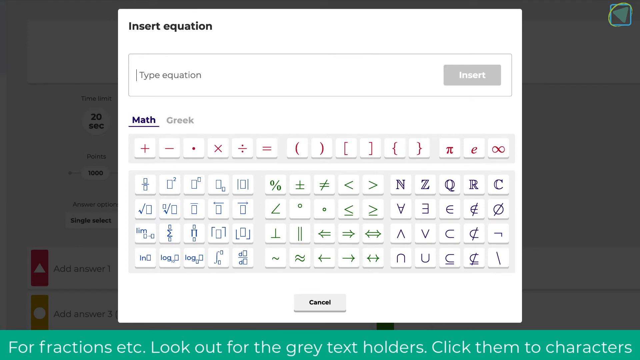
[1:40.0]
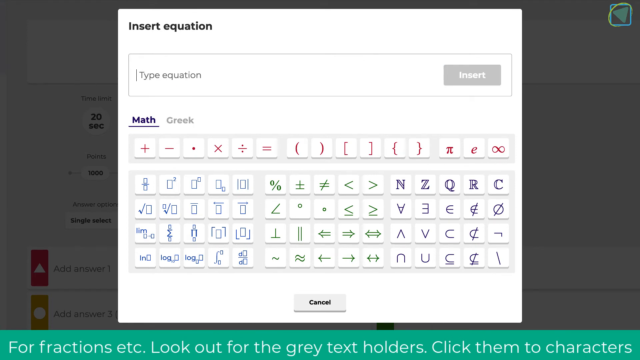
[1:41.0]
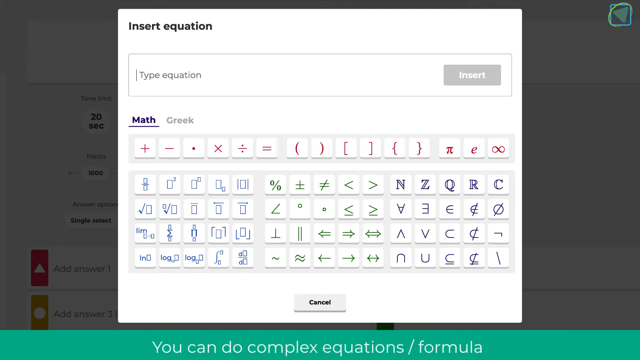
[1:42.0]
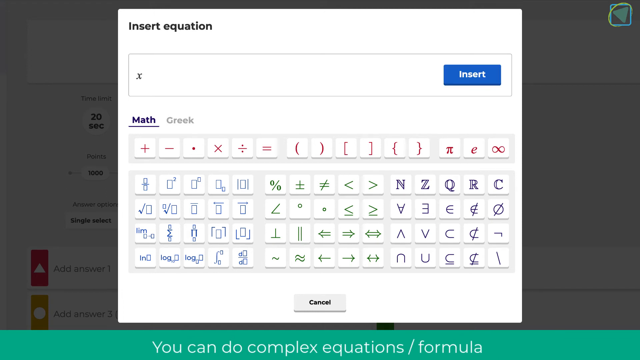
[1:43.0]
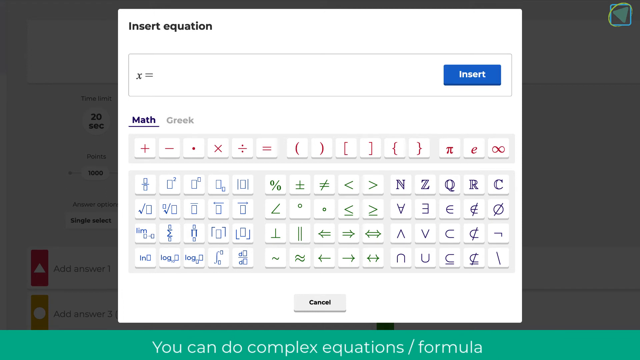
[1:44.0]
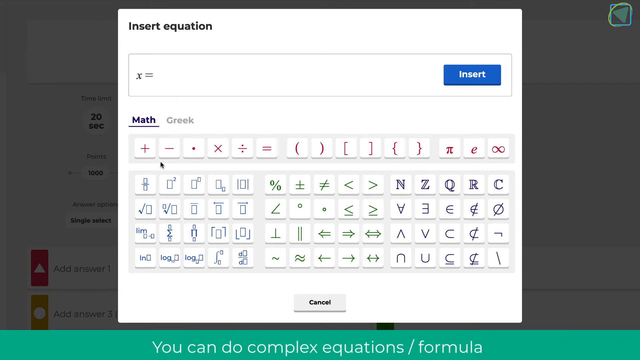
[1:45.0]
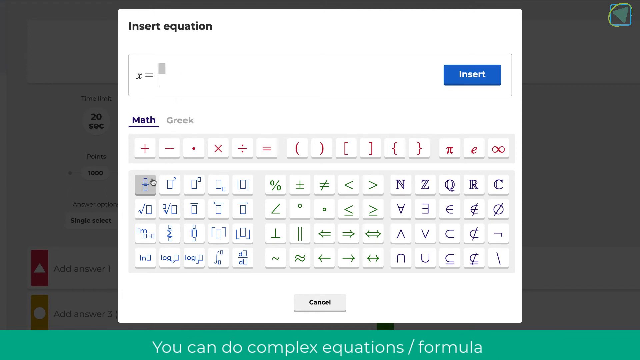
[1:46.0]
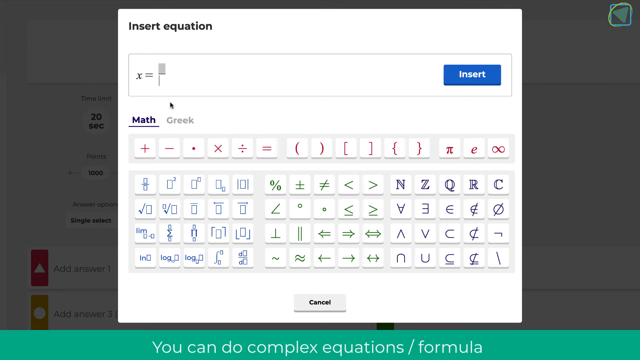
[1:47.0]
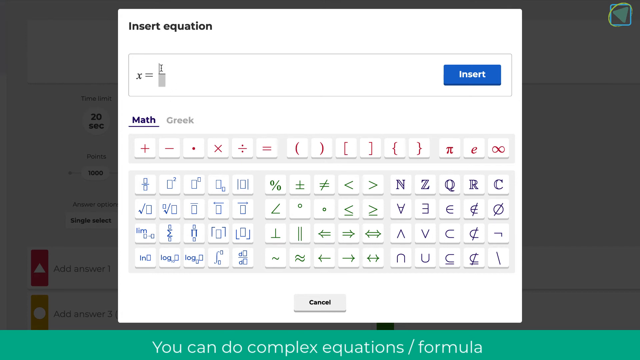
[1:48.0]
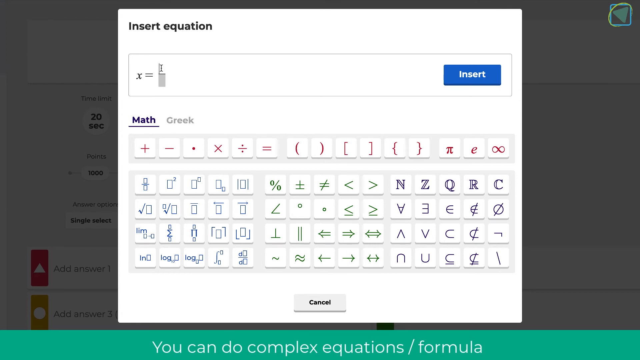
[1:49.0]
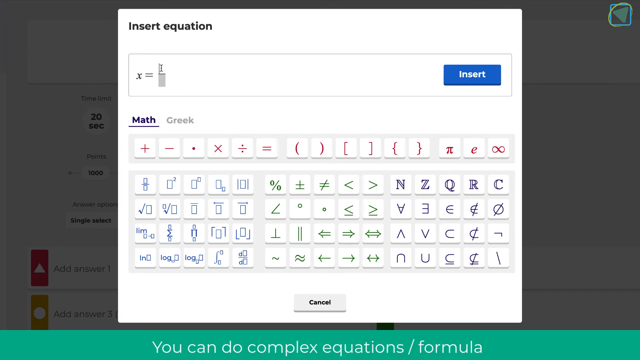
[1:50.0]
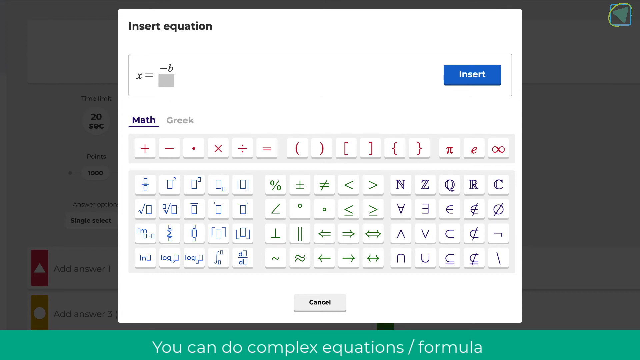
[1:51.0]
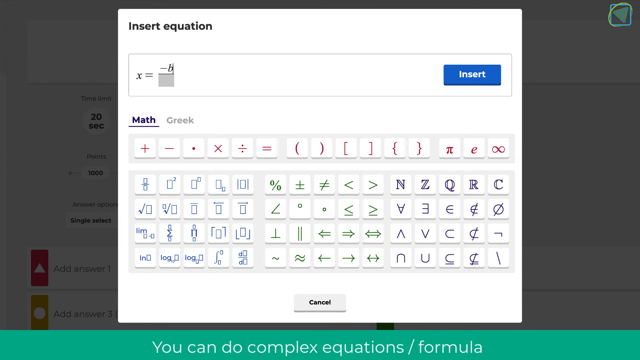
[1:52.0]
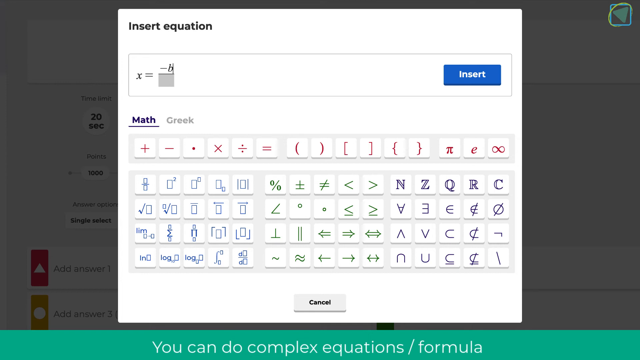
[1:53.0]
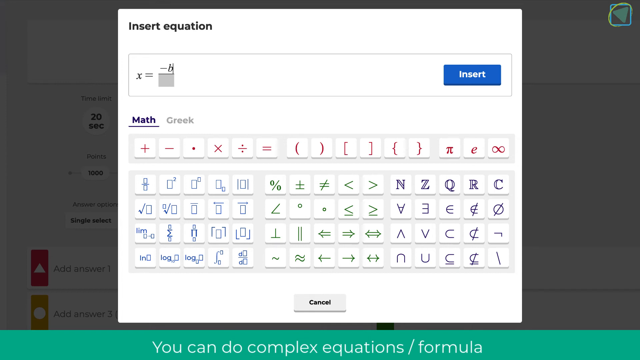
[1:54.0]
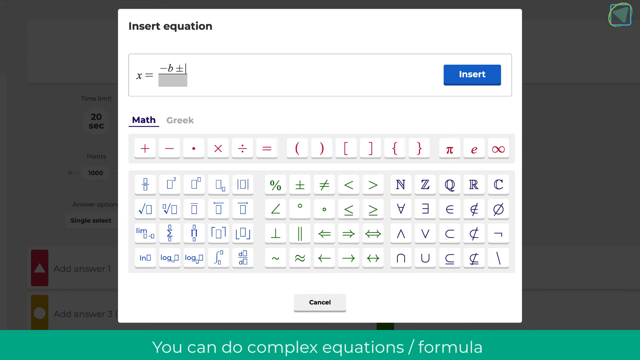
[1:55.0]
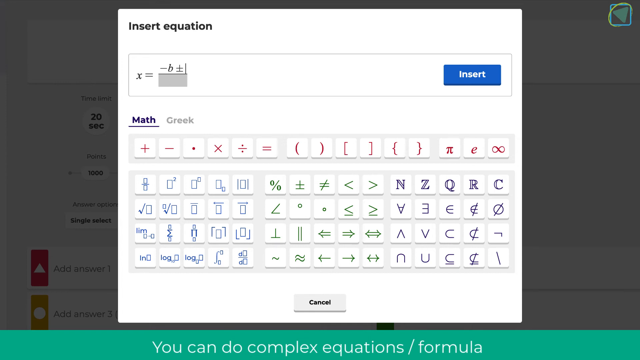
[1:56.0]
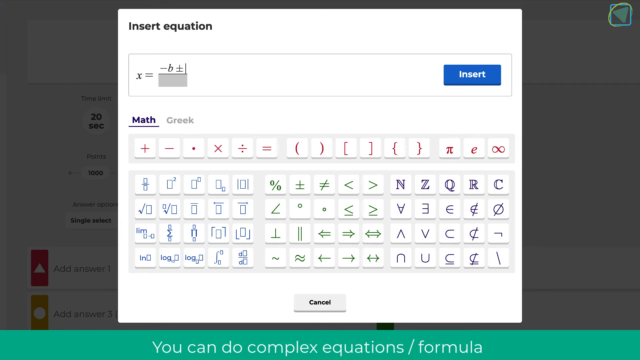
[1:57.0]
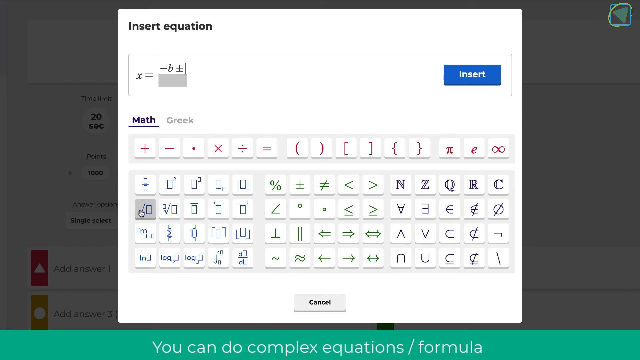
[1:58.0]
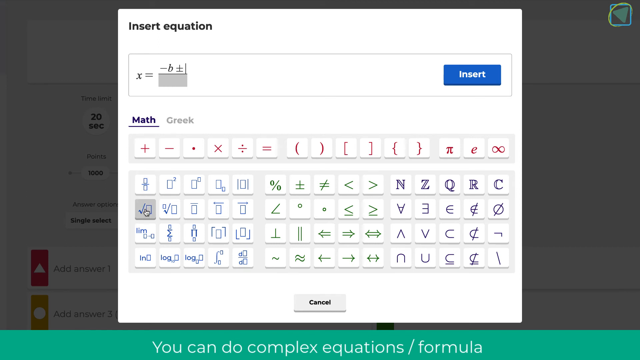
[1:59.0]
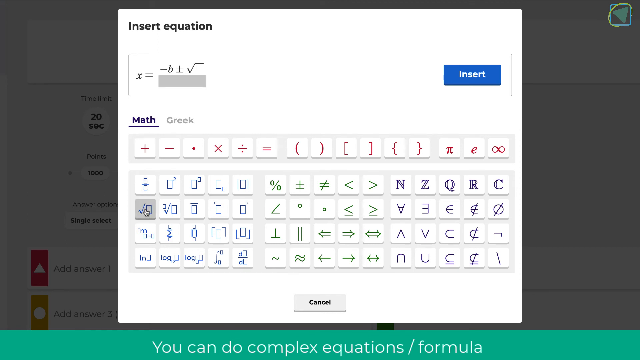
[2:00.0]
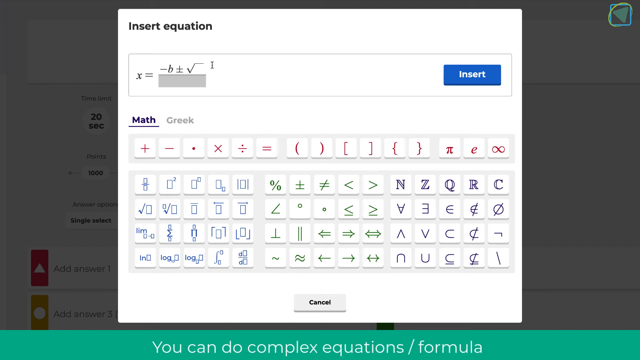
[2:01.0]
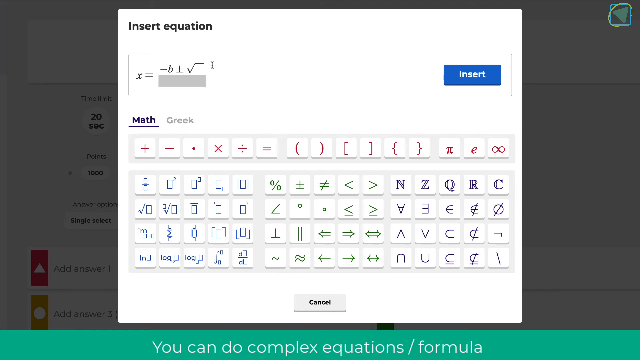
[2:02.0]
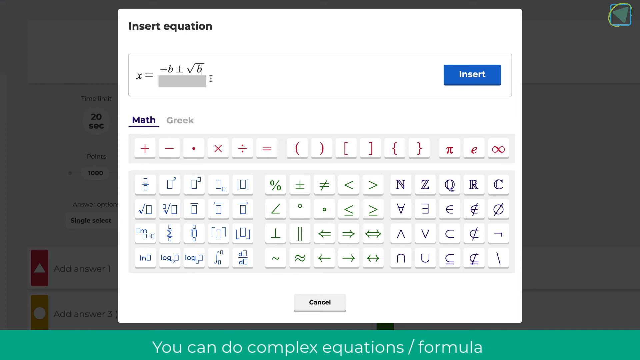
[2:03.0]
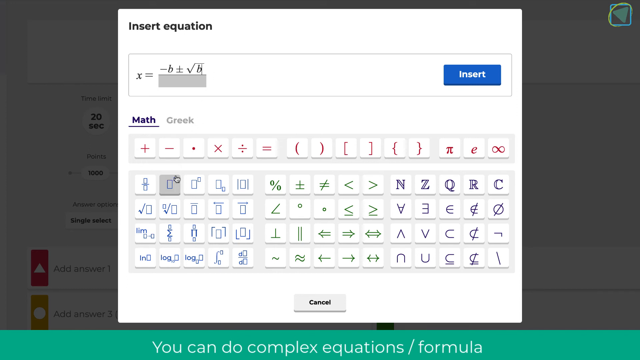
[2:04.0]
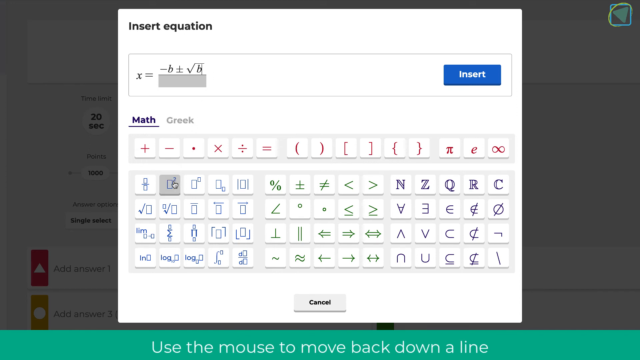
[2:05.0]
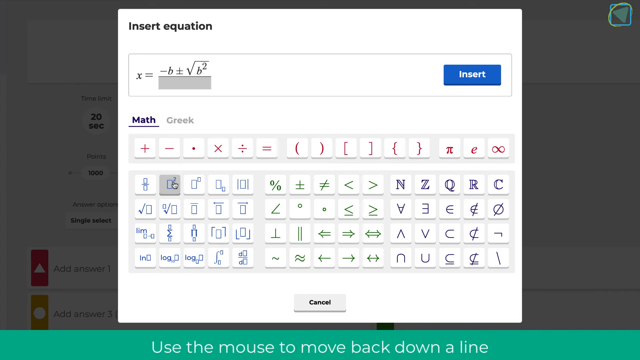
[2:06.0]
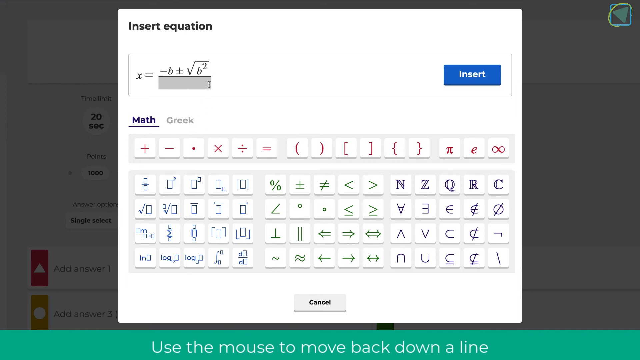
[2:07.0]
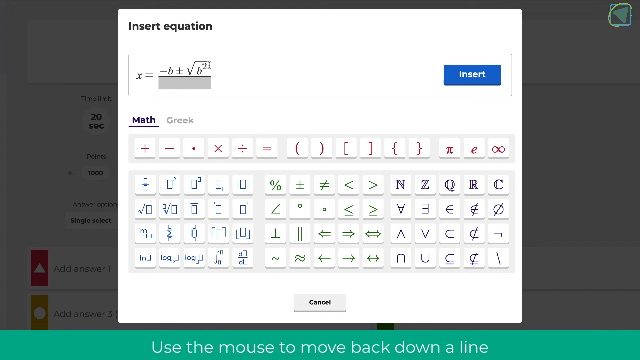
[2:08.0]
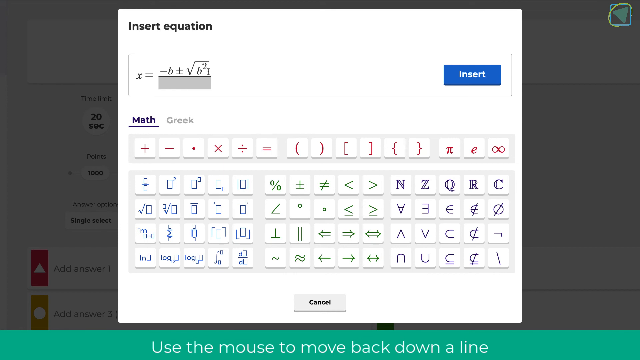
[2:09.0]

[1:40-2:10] With the fraction equation deleted, the user begins a more complicated equation in the blank equation editor box. He types the letter x and an equals sign, then moves his cursor down to the fraction button. In the numerator he types a negative sign and the letter b, then inserts a plus-minus sign found among the green buttons below the equation editor. He then finds the square root sign, types the letter b under it, and clicks the squared sign, which adds a superscripted two above the b within the square root. He moves his cursor up to that two and hovers it there for a moment.